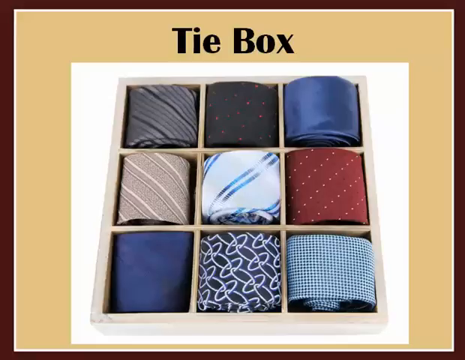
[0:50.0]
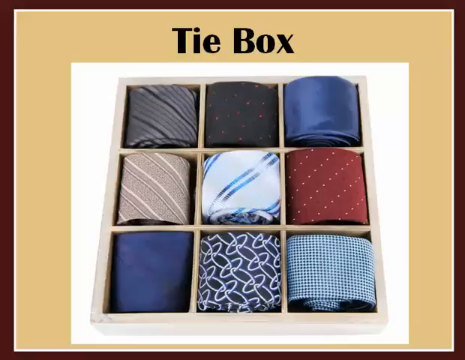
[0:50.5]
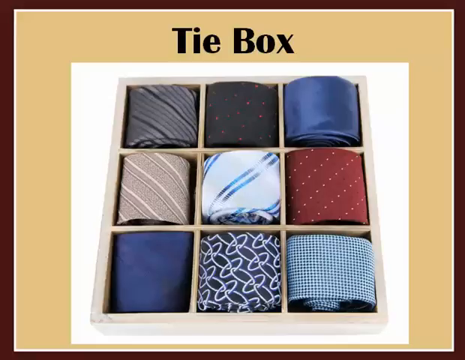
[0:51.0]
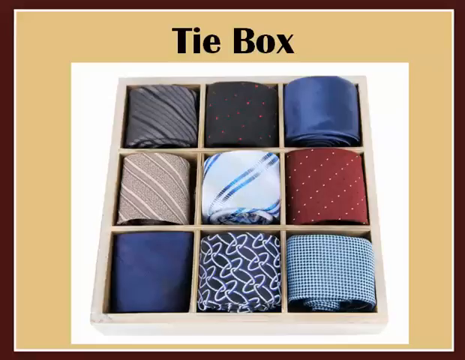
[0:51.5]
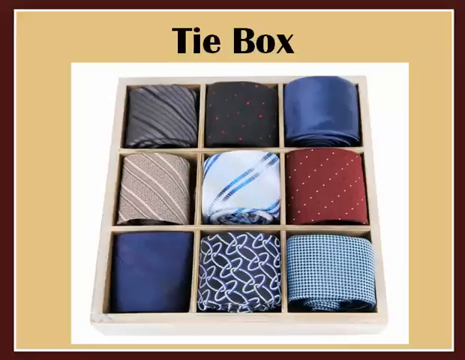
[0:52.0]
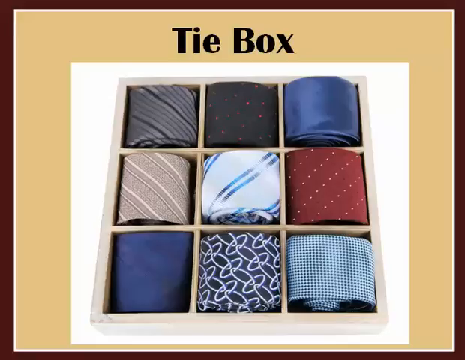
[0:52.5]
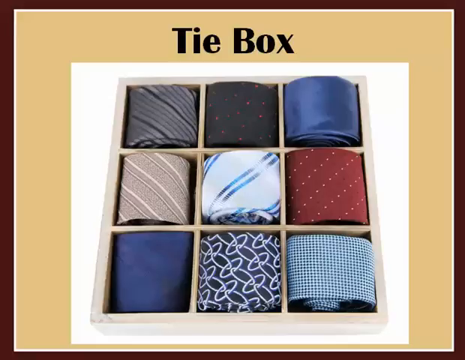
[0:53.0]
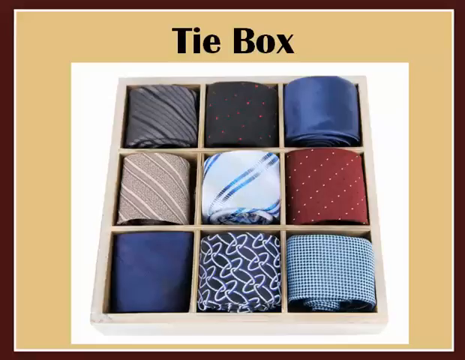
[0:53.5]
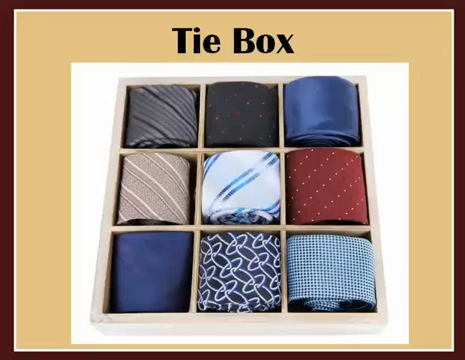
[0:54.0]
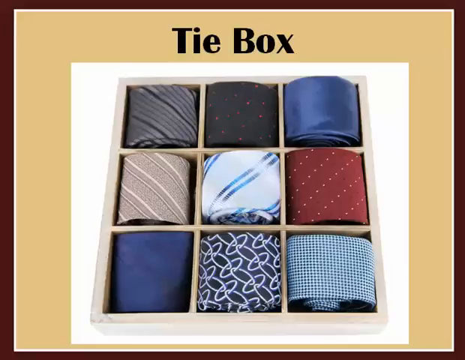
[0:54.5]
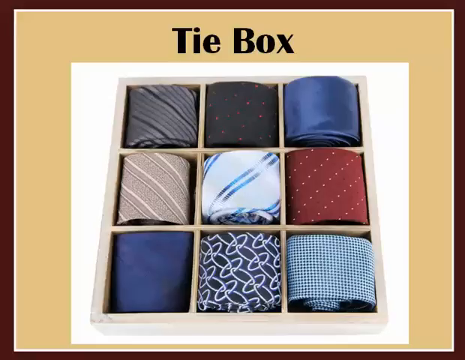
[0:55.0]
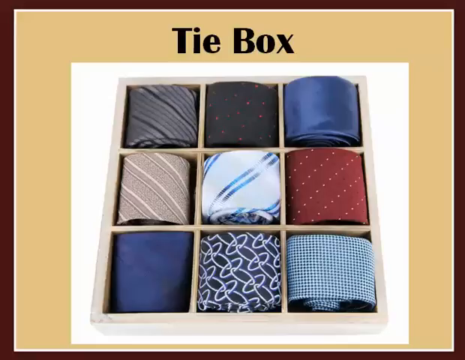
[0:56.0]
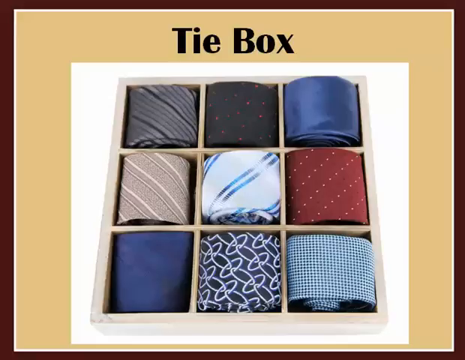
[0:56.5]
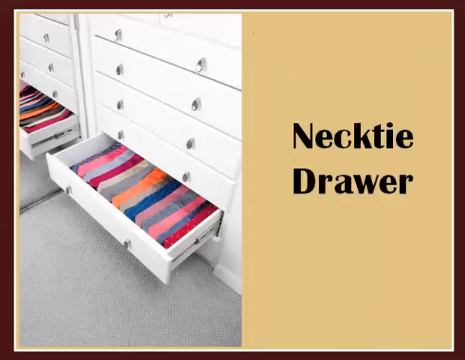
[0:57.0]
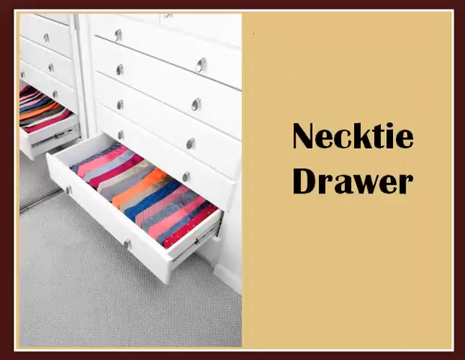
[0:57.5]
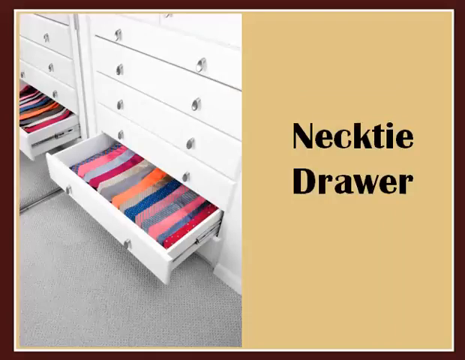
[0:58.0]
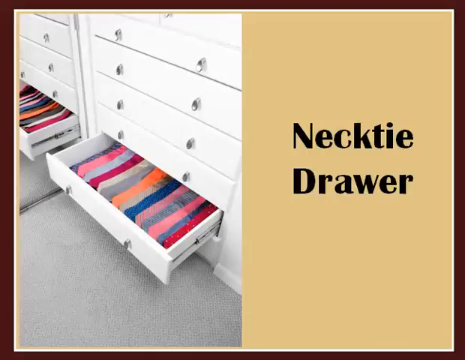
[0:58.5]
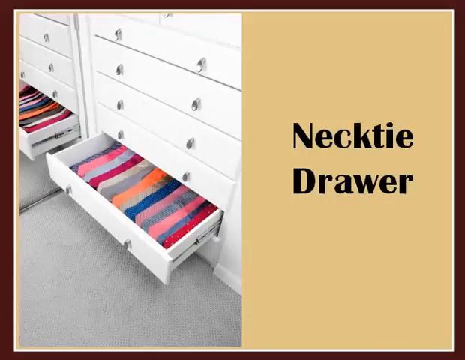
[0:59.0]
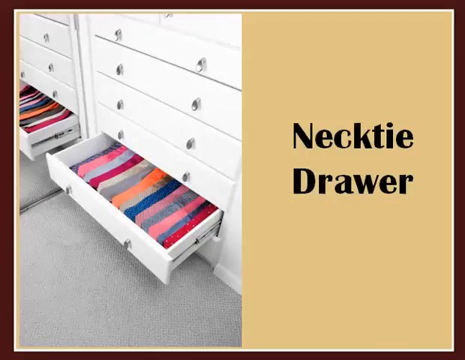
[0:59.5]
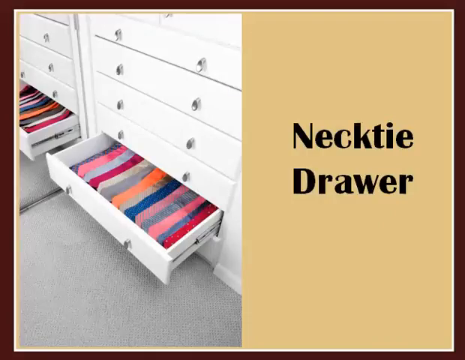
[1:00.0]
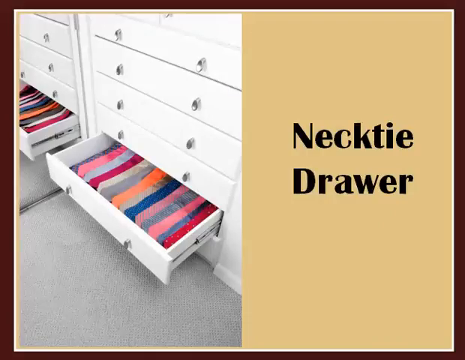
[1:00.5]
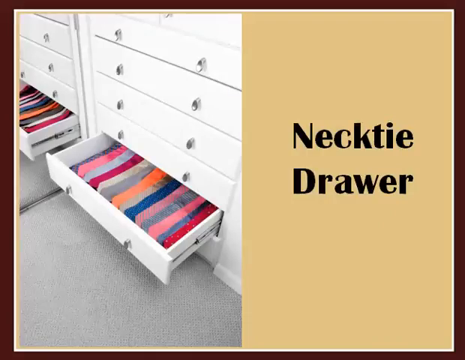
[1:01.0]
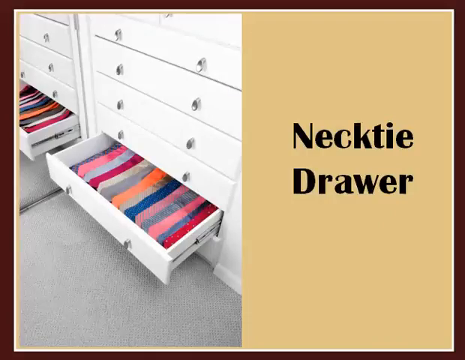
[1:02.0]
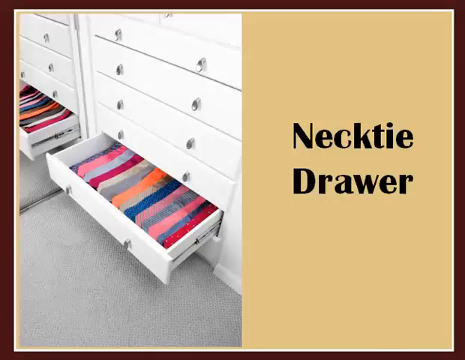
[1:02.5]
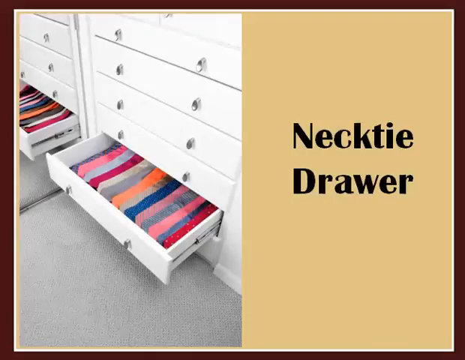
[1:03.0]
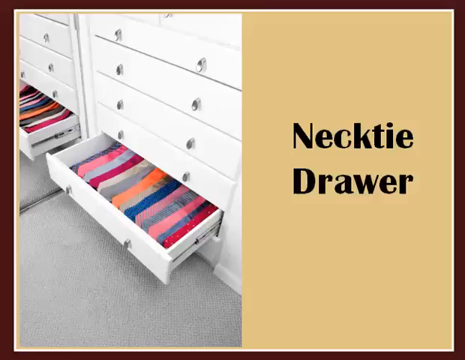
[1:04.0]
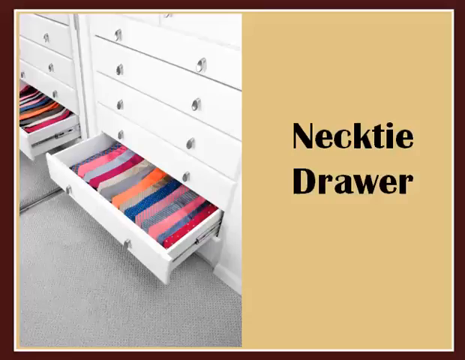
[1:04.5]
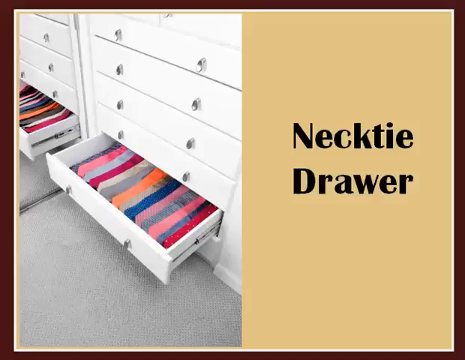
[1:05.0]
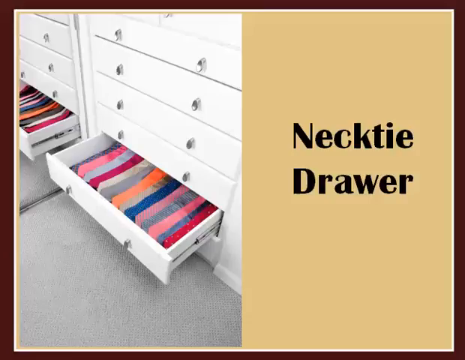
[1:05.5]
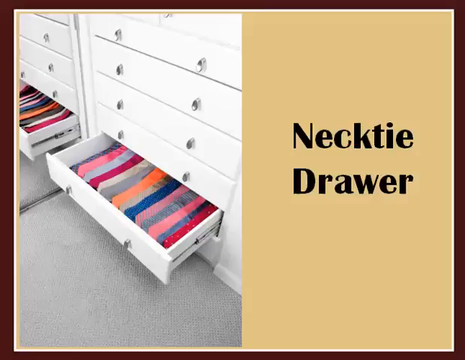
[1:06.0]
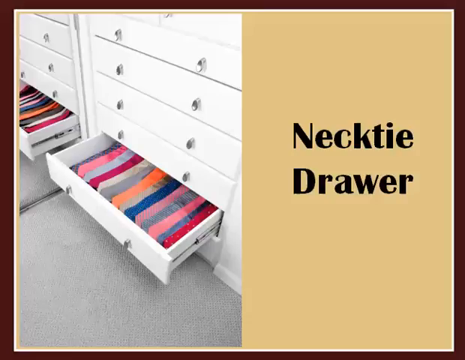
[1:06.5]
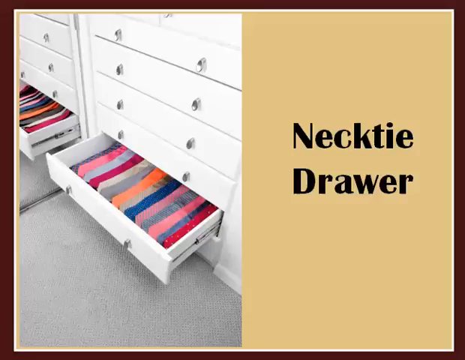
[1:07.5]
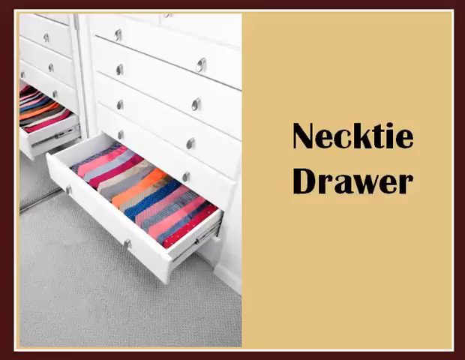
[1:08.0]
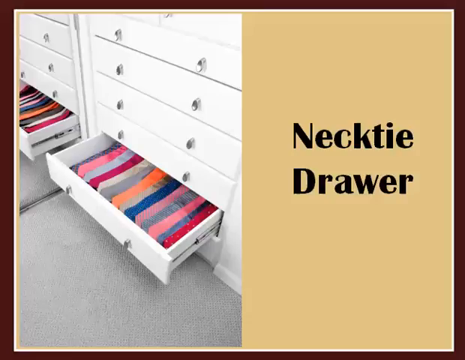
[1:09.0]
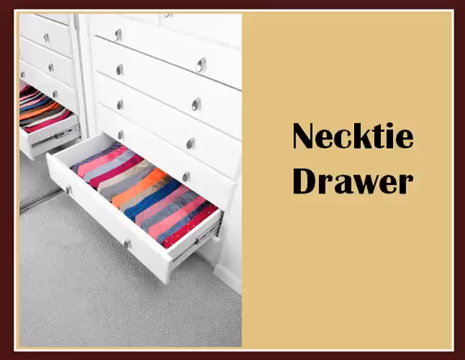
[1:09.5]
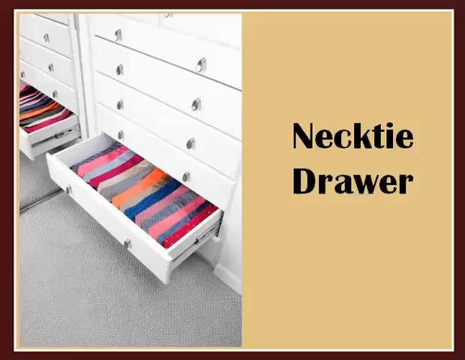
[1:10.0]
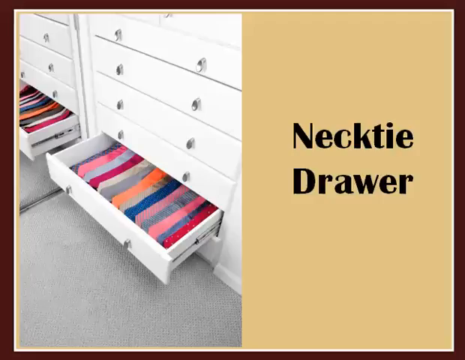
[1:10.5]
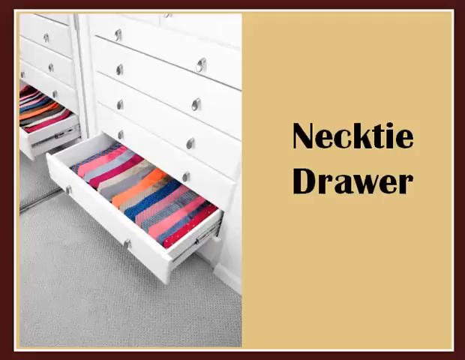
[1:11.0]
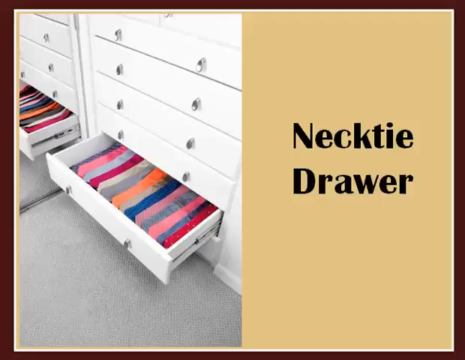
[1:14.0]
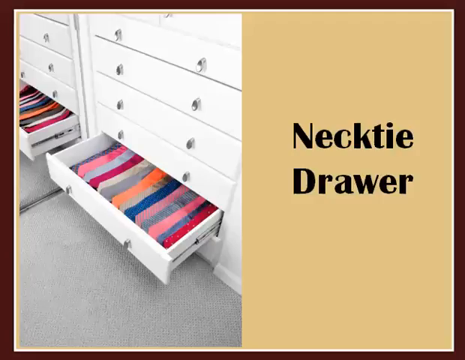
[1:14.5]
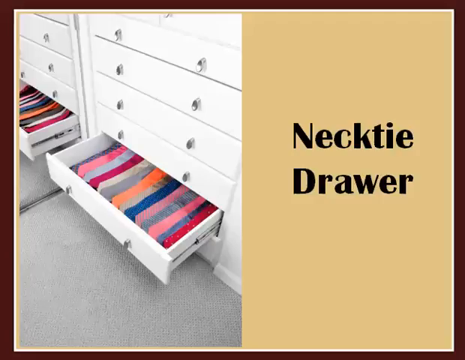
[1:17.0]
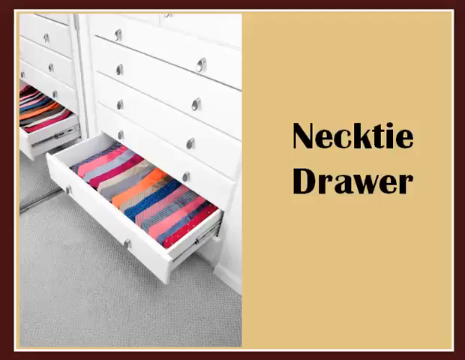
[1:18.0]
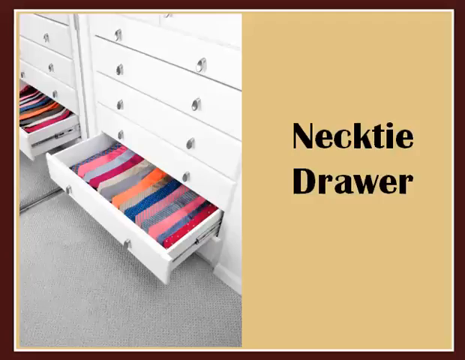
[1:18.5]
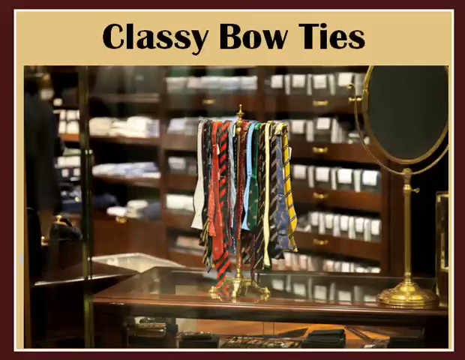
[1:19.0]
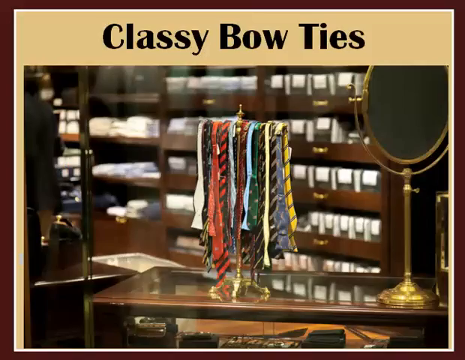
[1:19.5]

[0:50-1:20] The tie box with nine ties, one in each square section, is still shown. A title then reads "Necktie Drawer", and beside it is a chest of drawers next to a mirror. The drawers have silver handles, two per drawer, and five drawers are visible. The bottom drawer is open and holds about 14 ties in colours such as red, blue, pink, grey, orange and khaki; some are plain and some have designs. There is a grey carpet on the floor, and a reflection of the drawers can be seen in the mirrors on the left. The video then shows the classy bow ties in a shop, where they seem to be hanging on a metal object, with a round mirror beside them.